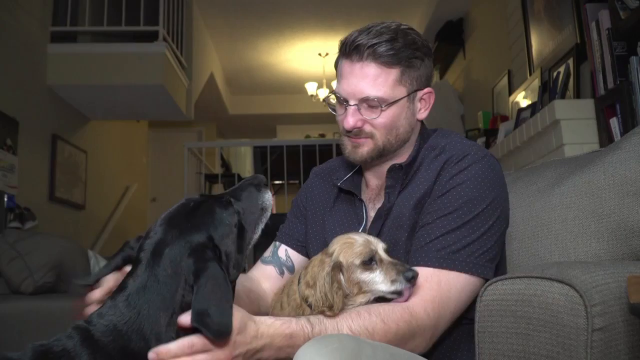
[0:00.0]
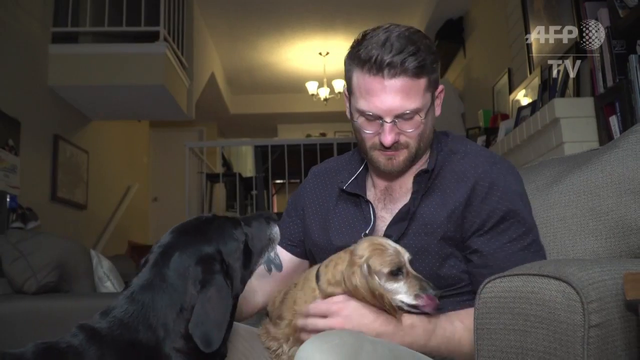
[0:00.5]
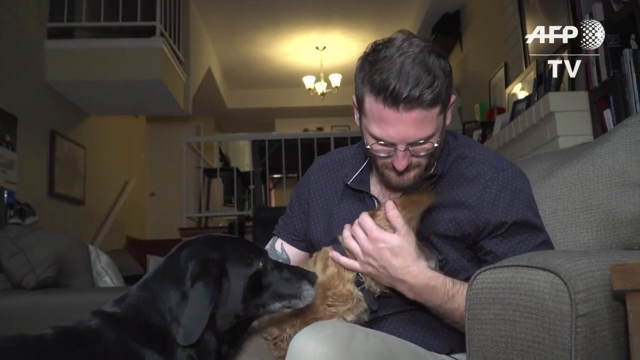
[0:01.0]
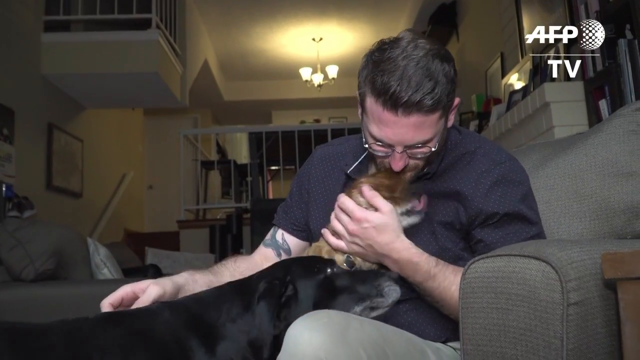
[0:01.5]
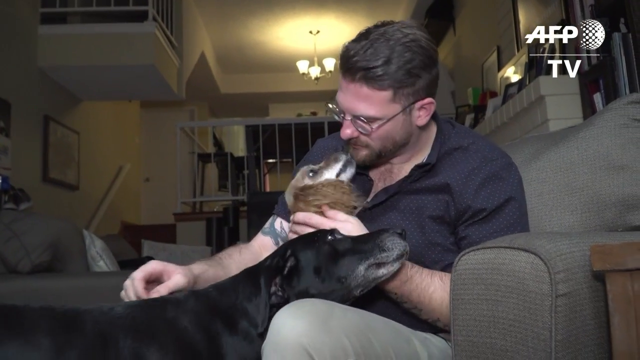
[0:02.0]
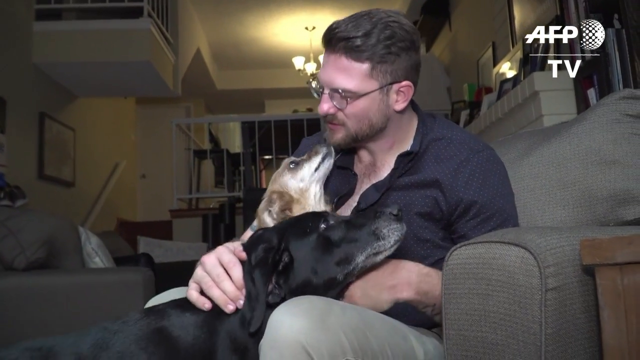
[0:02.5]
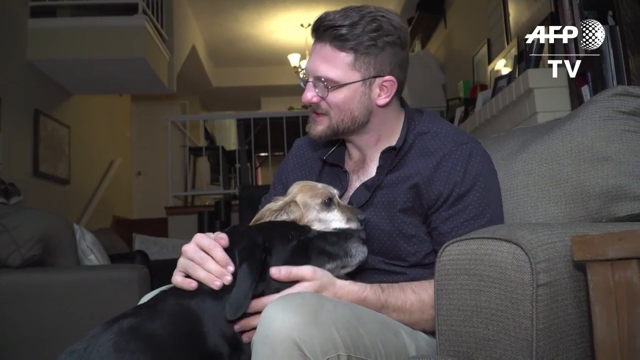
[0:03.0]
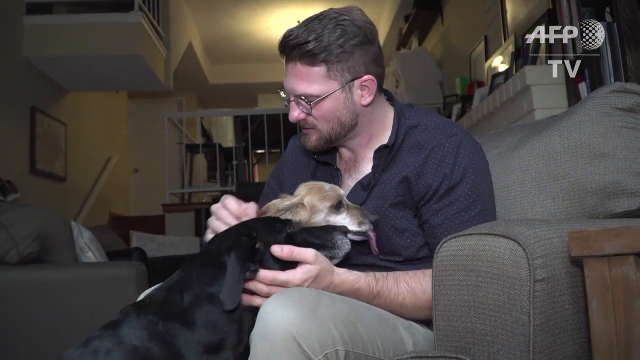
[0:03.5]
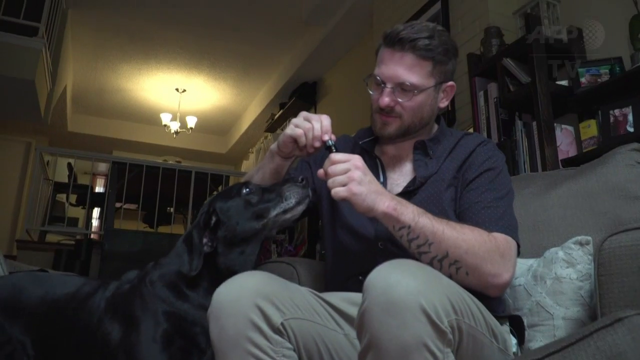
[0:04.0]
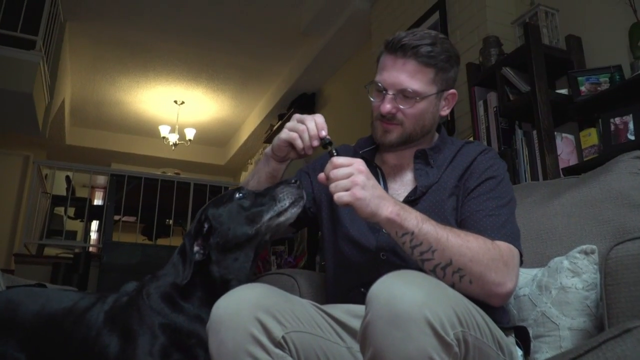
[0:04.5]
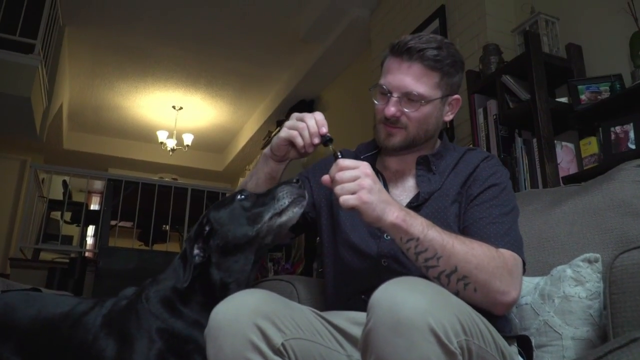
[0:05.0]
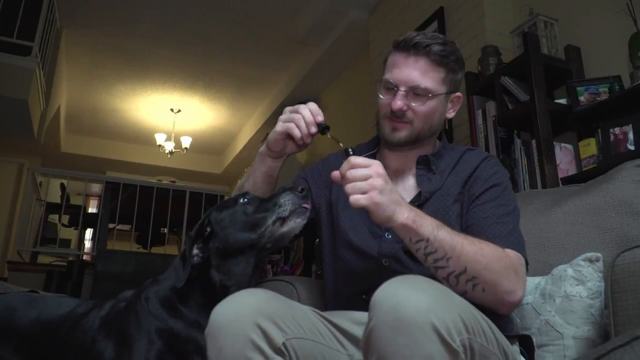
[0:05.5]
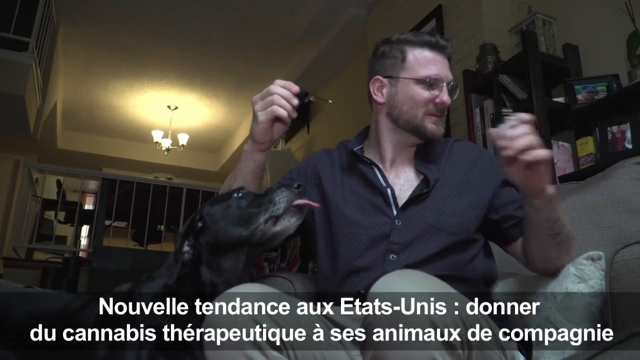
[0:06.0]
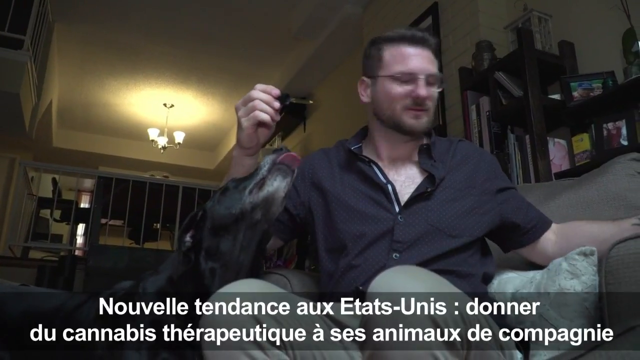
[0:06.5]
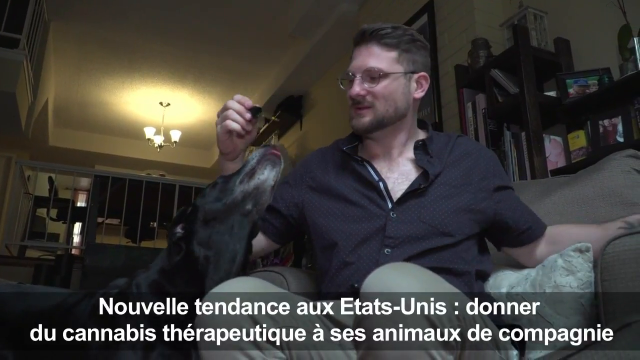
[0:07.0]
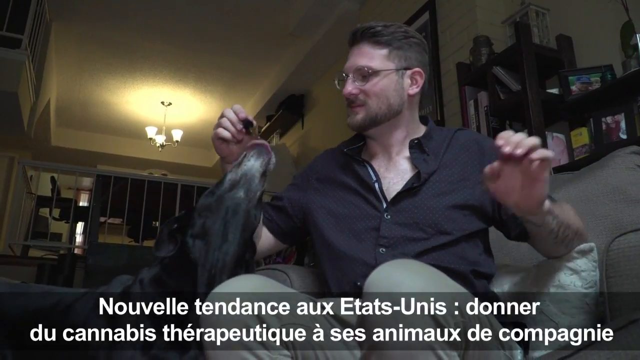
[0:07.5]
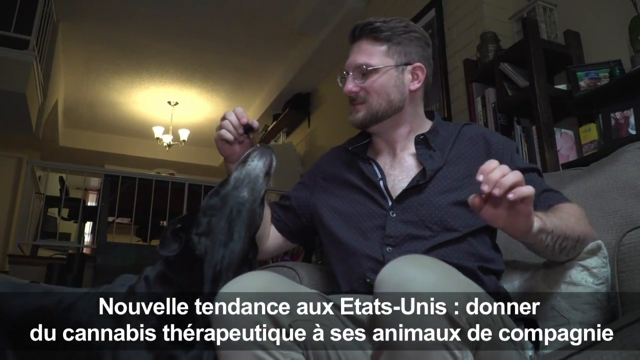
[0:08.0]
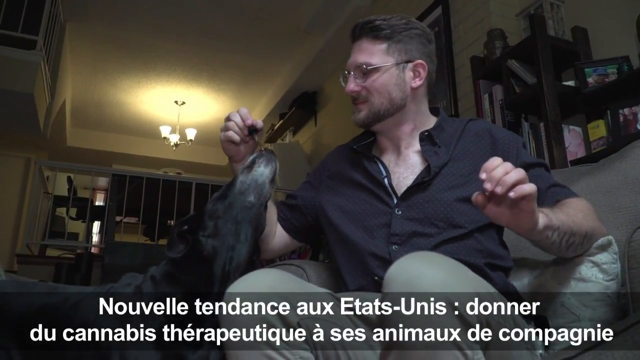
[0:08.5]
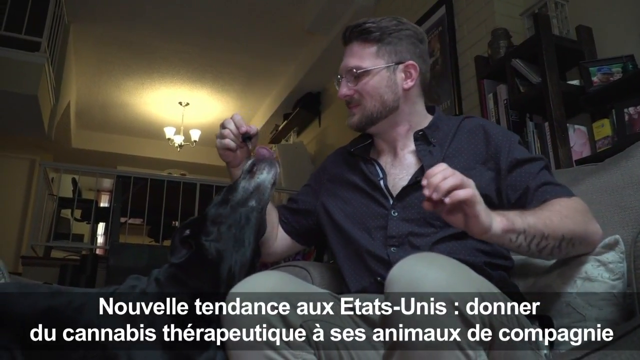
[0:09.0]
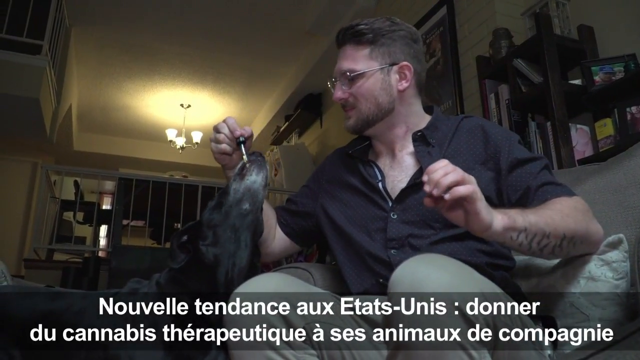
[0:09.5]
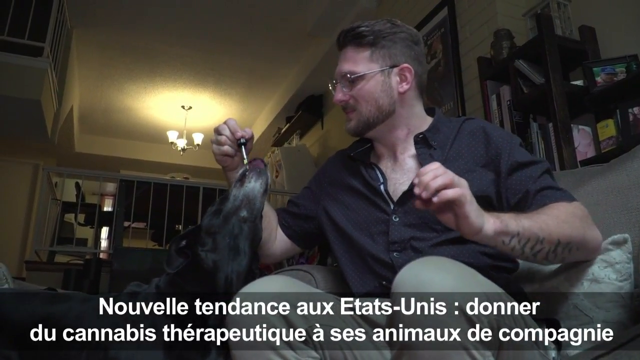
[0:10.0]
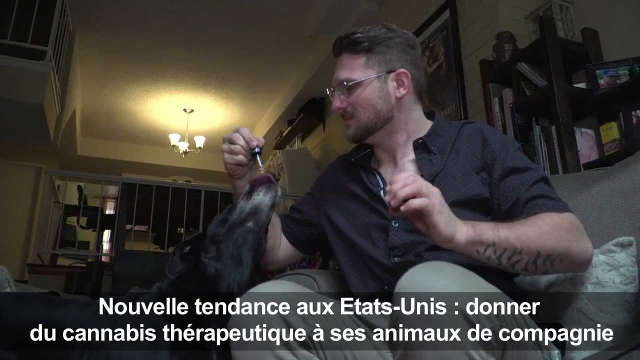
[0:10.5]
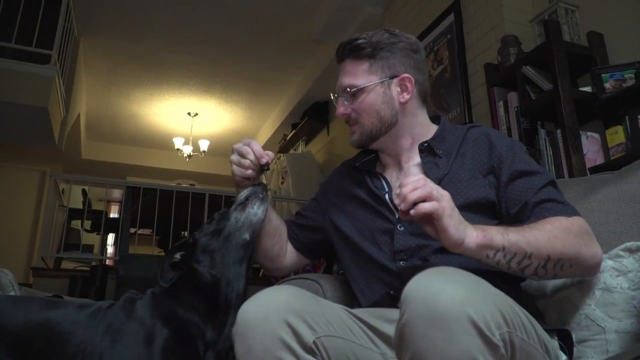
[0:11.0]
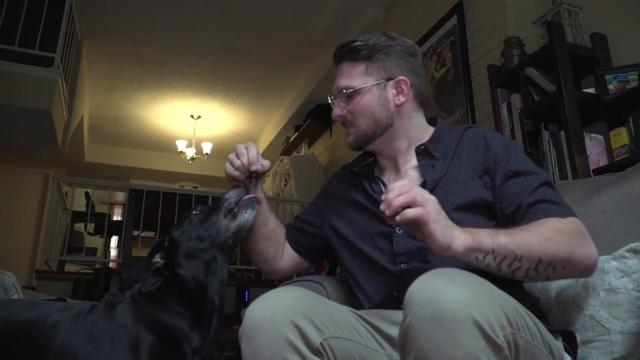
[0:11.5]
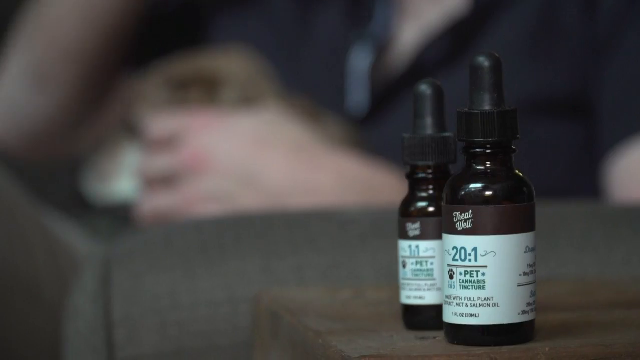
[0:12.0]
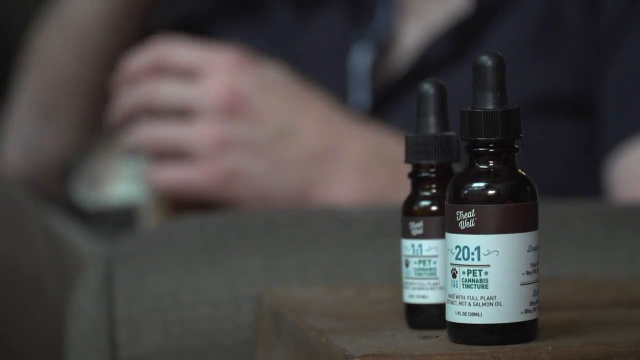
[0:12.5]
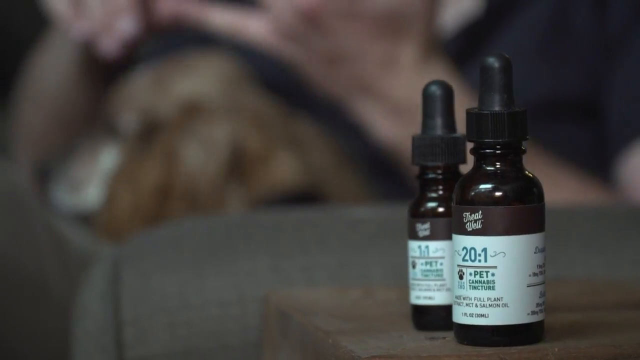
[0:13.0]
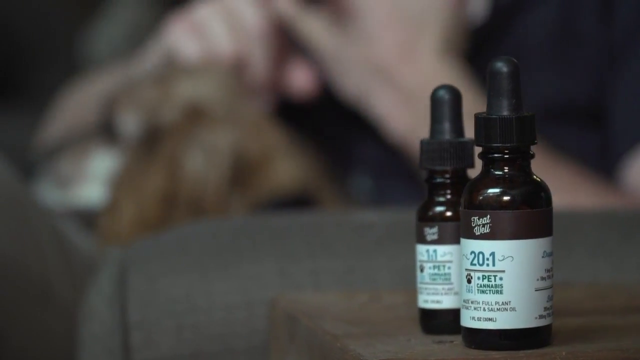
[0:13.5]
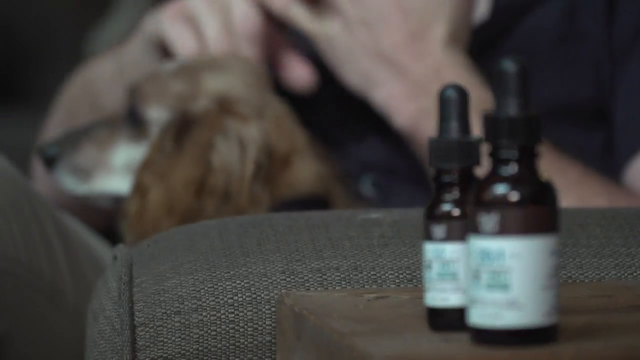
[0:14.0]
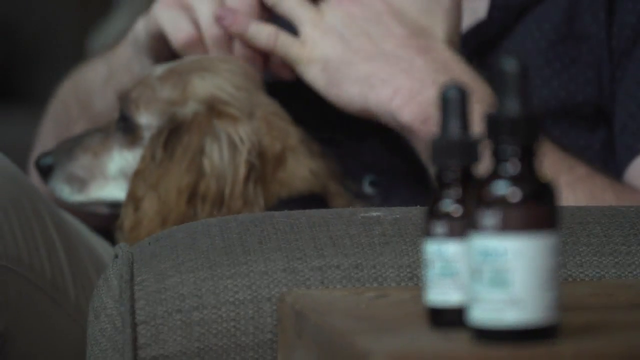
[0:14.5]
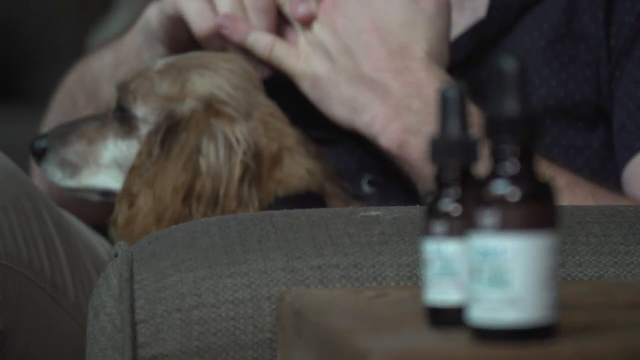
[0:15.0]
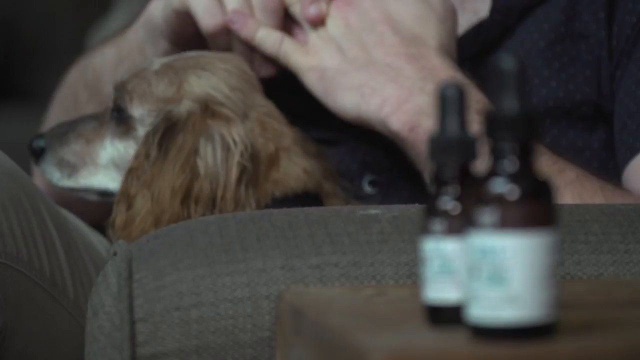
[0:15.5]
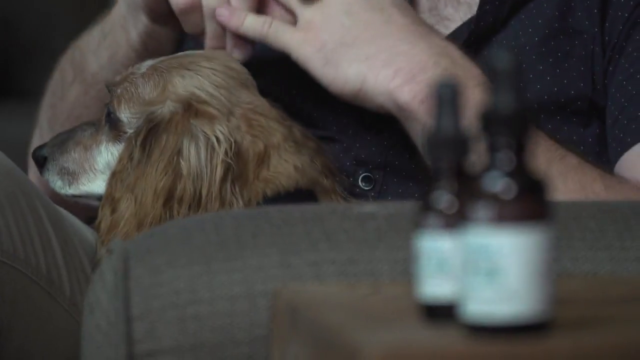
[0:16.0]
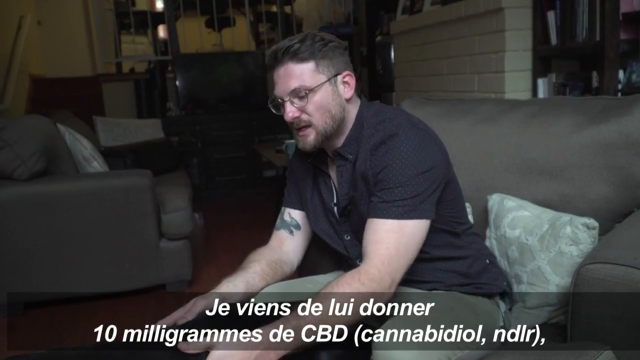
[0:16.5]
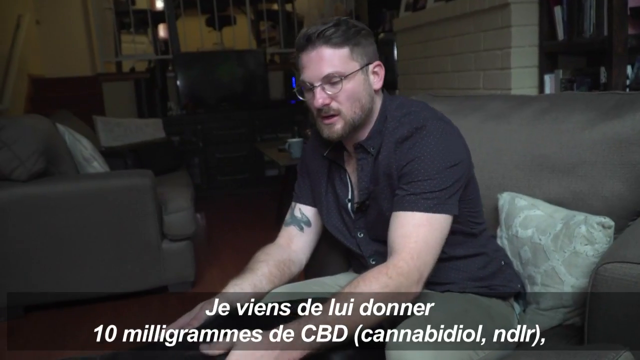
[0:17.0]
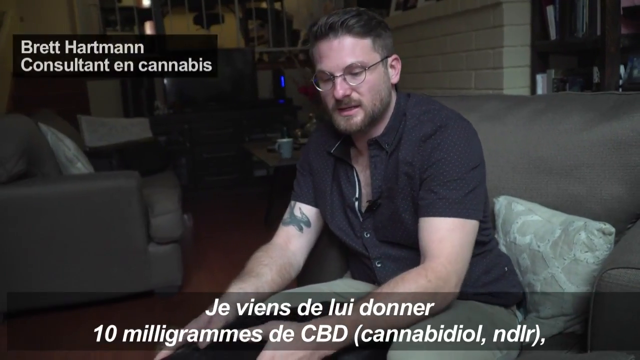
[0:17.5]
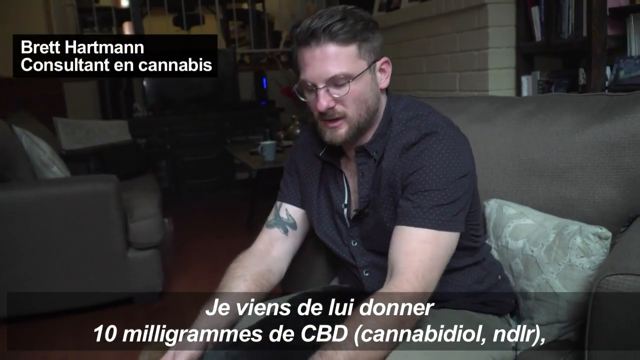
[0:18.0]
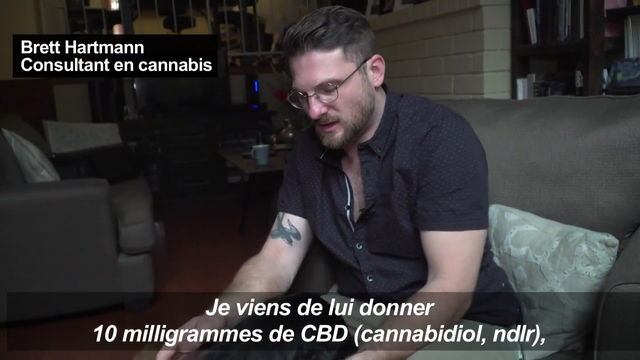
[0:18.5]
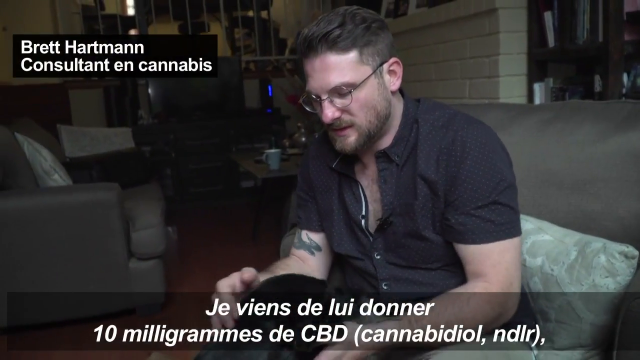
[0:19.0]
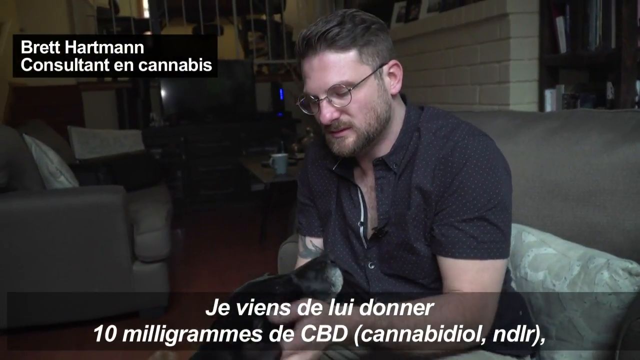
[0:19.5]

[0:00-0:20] A man with dark hair and dark eyes, glasses, a mustache and a beard, wearing a short-sleeved black shirt, holds two dogs in his arms: one is light-colored, and the other is dark with a gray muzzle. He seems to be enjoying his time with the dogs. French closed captions run along the bottom of the screen and appear to mention cannabis therapy for his animal, possibly a treatment for the dog, which may have cancer. Text at the bottom includes "10 milligrams", "CBD" and "cannaboid". His name, Brett Hartmann, appears on screen along with his title as a consultant in cannabis.